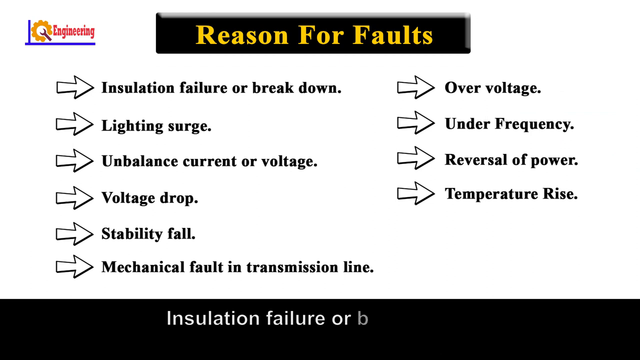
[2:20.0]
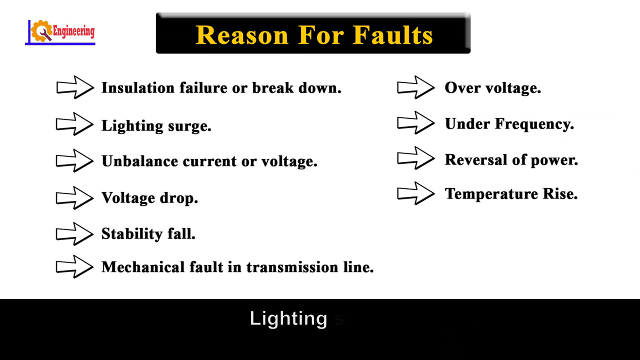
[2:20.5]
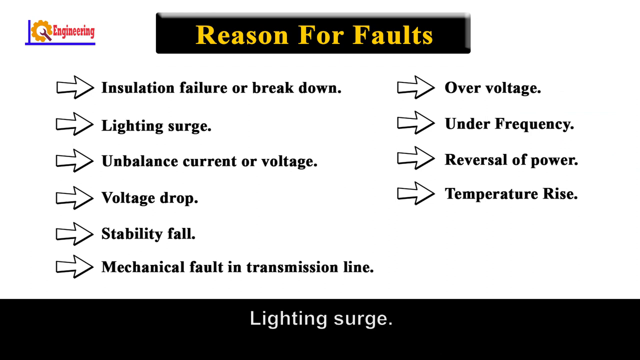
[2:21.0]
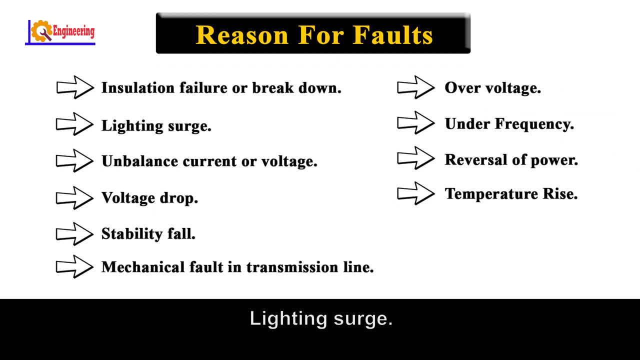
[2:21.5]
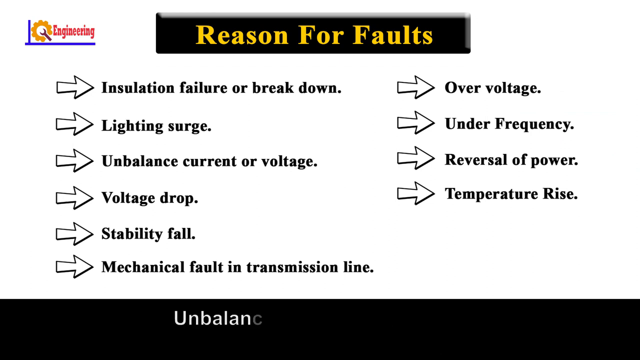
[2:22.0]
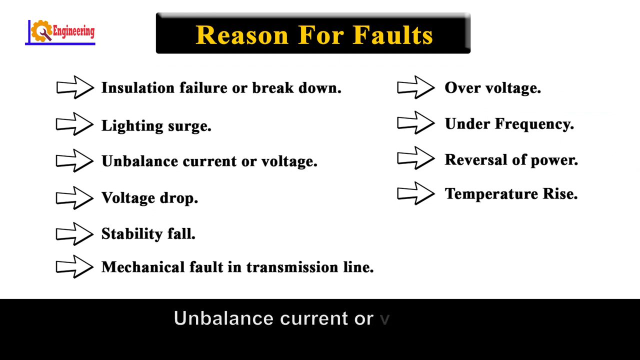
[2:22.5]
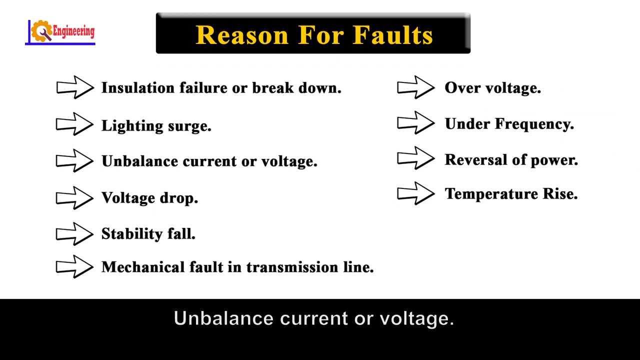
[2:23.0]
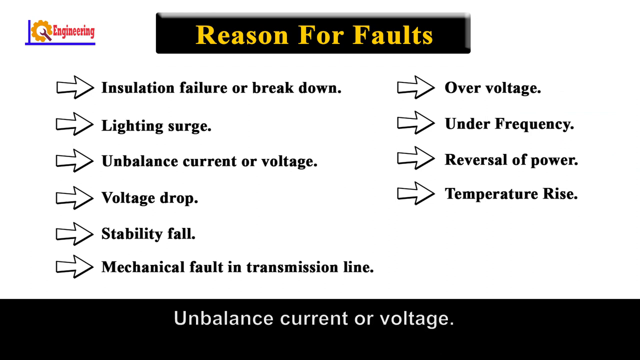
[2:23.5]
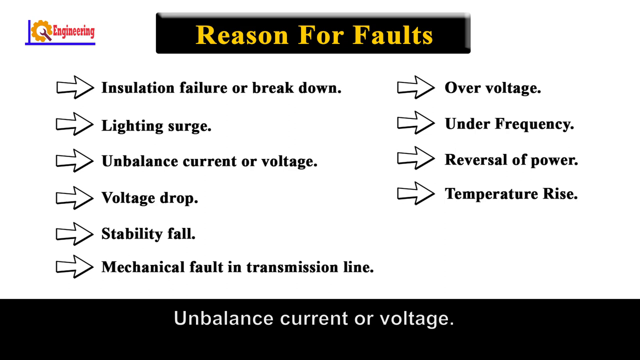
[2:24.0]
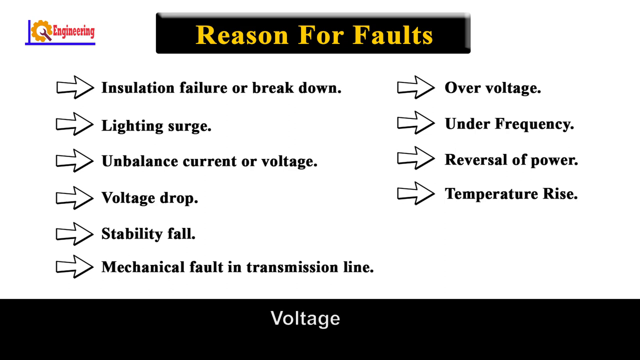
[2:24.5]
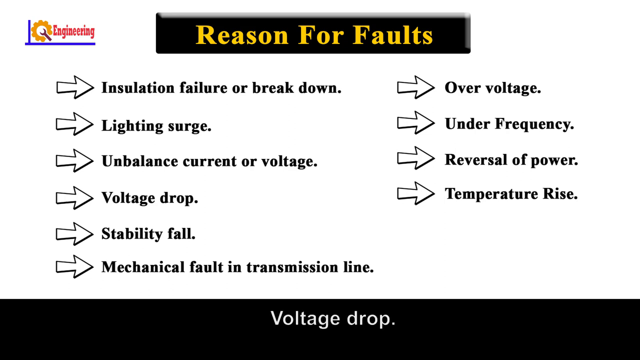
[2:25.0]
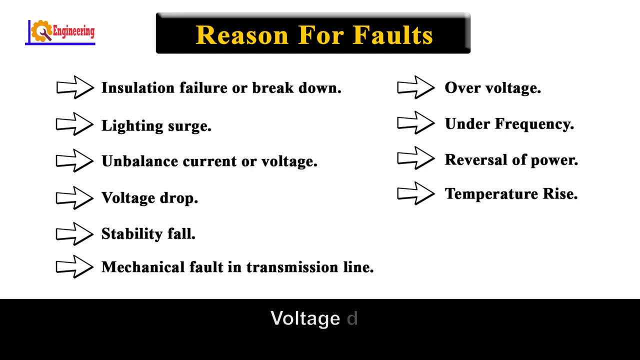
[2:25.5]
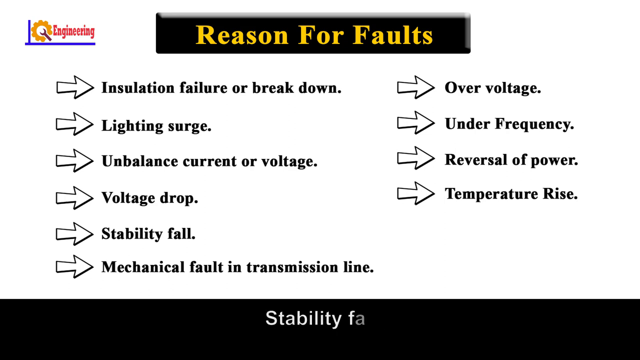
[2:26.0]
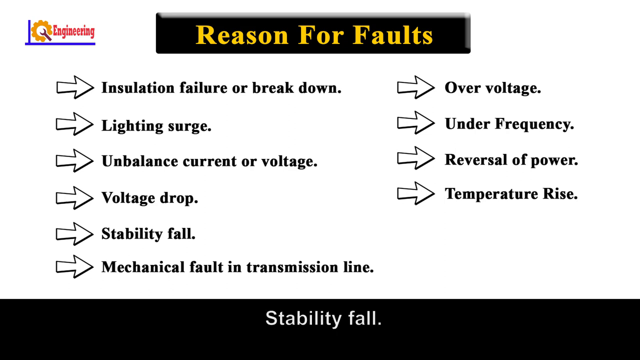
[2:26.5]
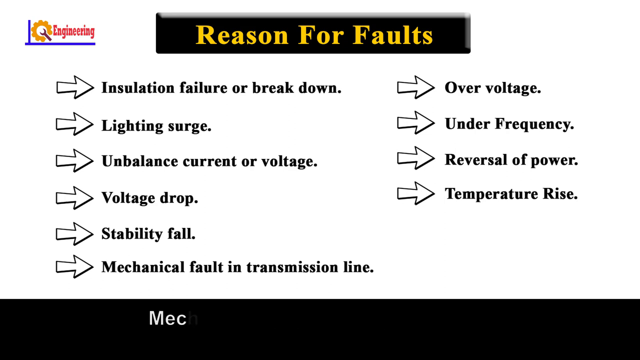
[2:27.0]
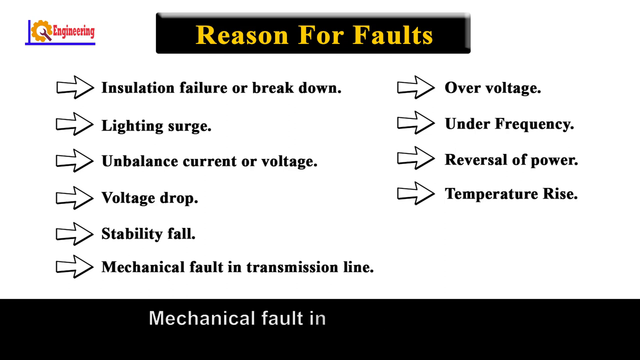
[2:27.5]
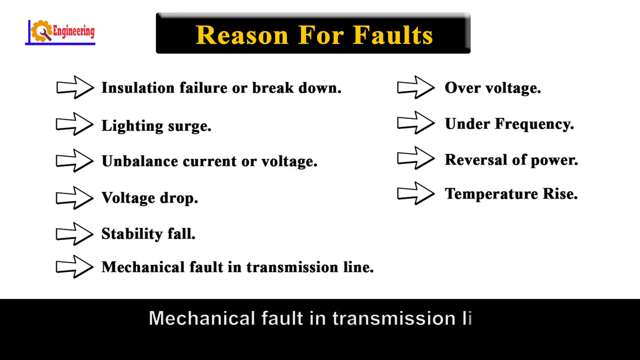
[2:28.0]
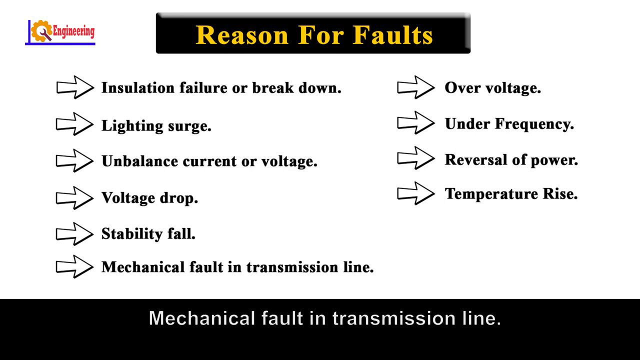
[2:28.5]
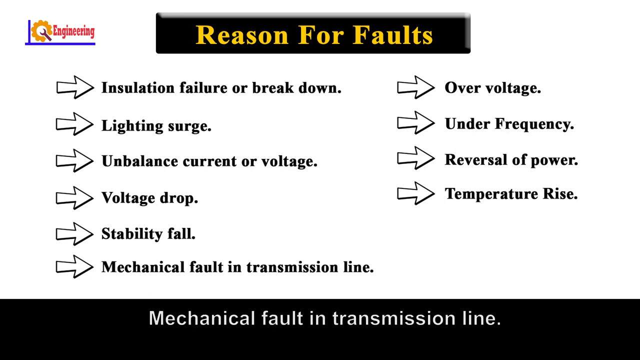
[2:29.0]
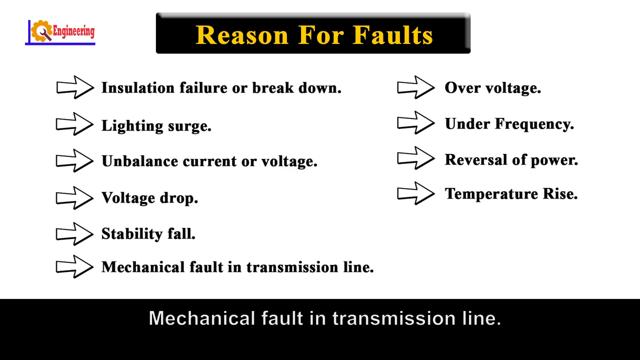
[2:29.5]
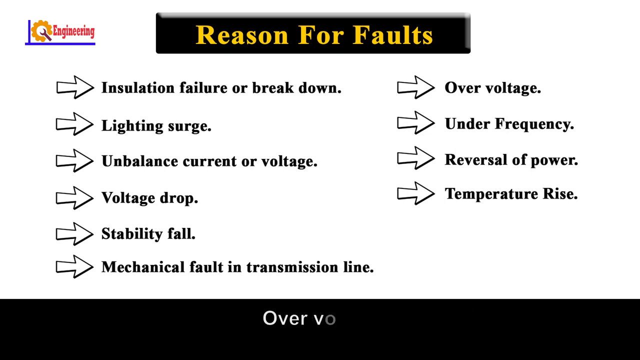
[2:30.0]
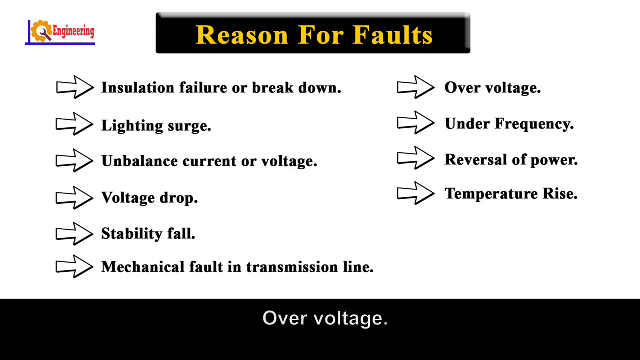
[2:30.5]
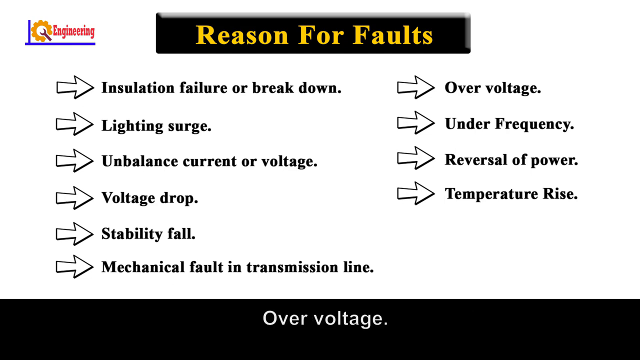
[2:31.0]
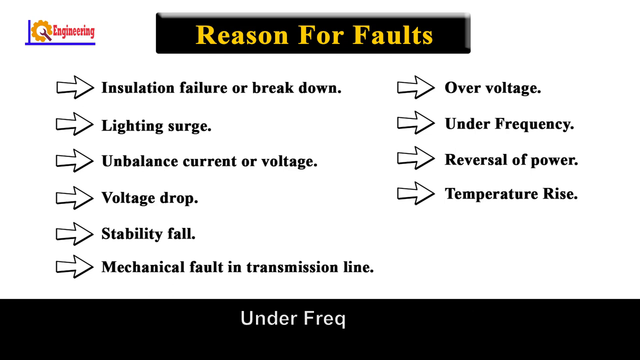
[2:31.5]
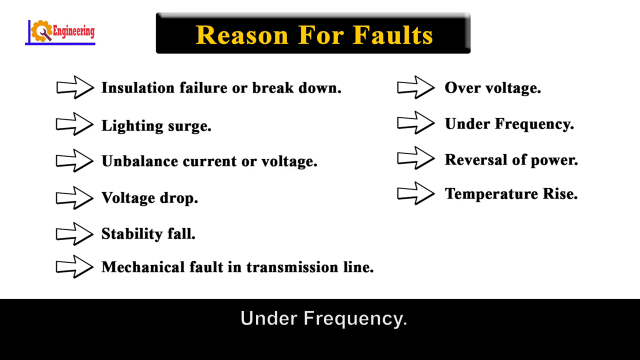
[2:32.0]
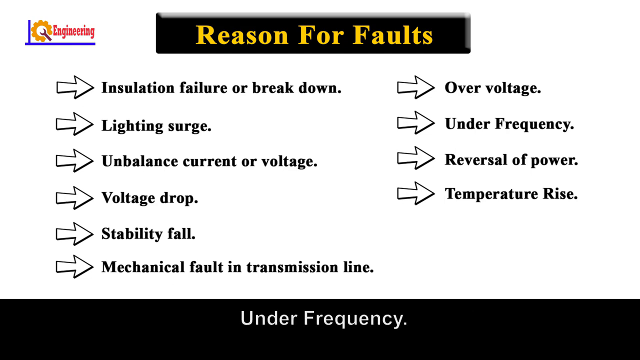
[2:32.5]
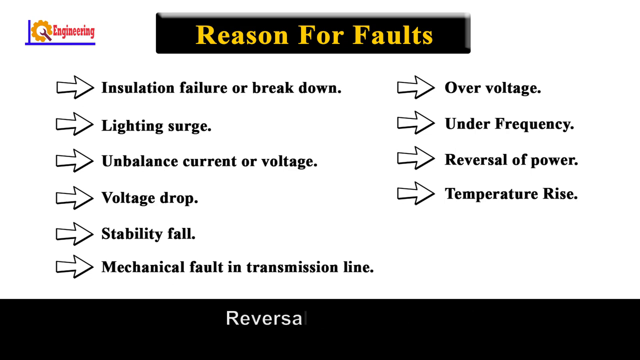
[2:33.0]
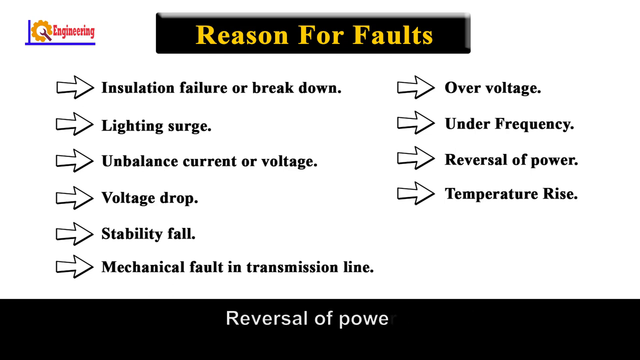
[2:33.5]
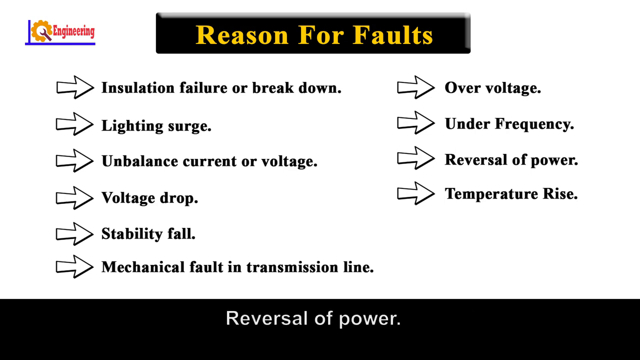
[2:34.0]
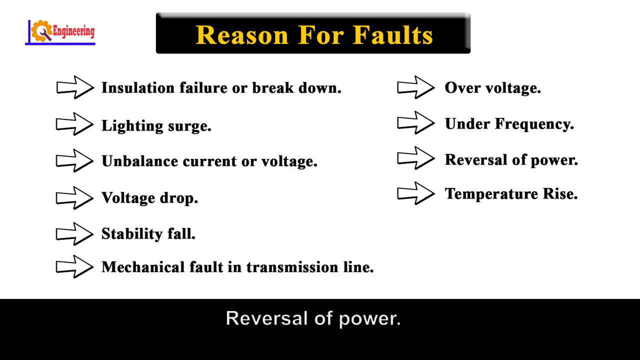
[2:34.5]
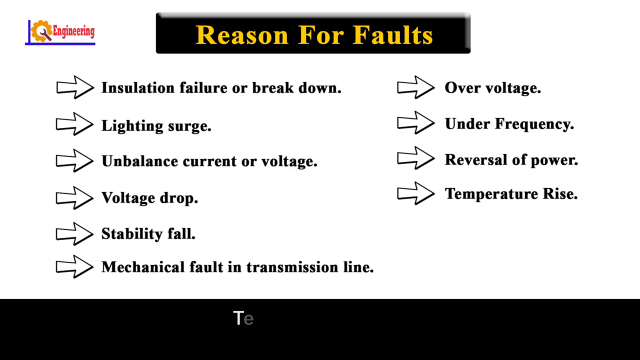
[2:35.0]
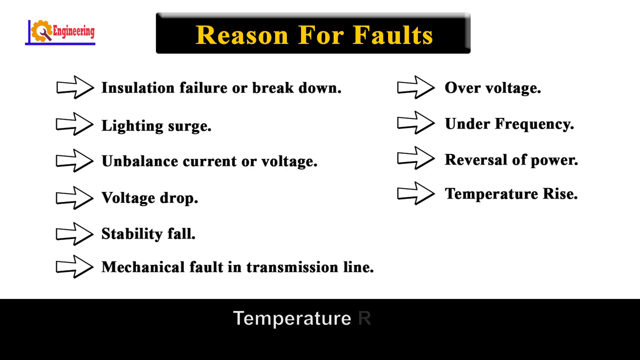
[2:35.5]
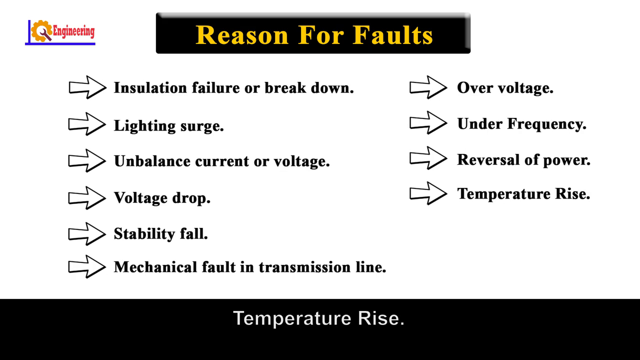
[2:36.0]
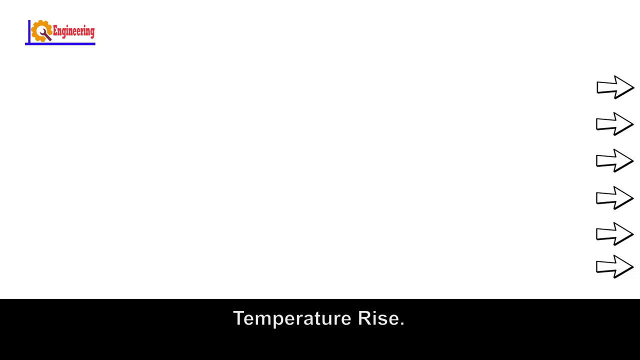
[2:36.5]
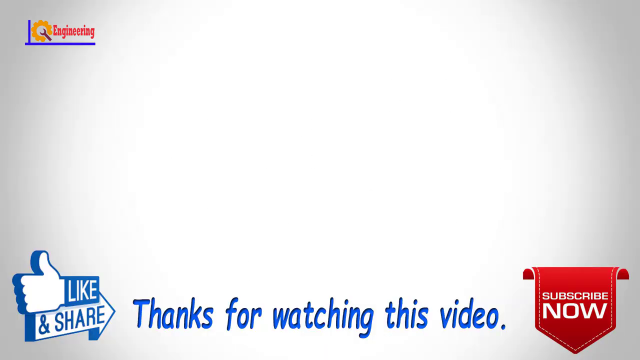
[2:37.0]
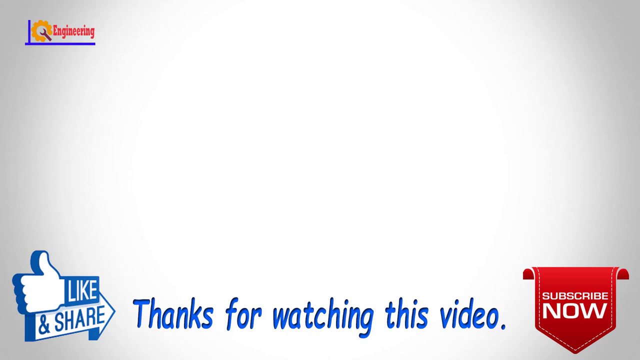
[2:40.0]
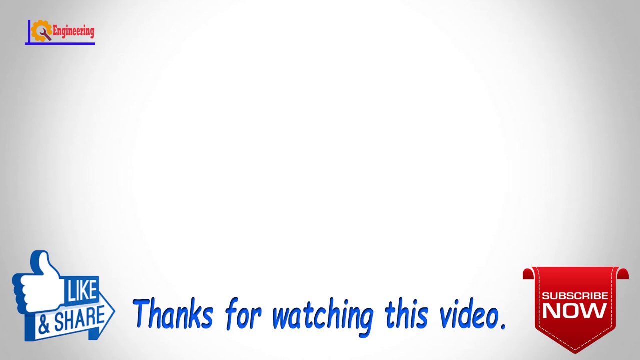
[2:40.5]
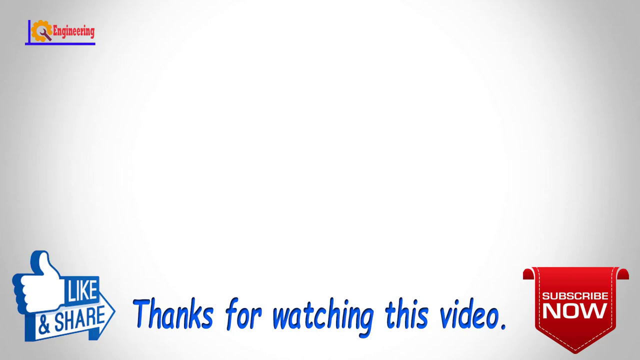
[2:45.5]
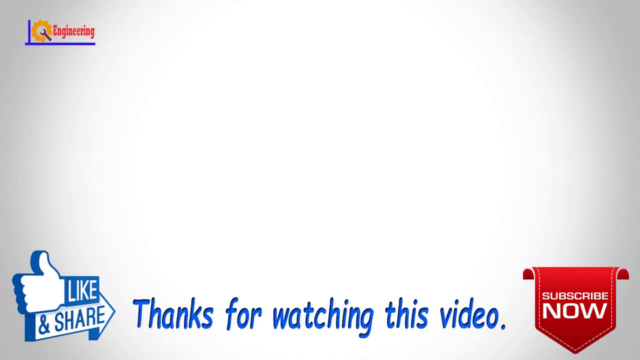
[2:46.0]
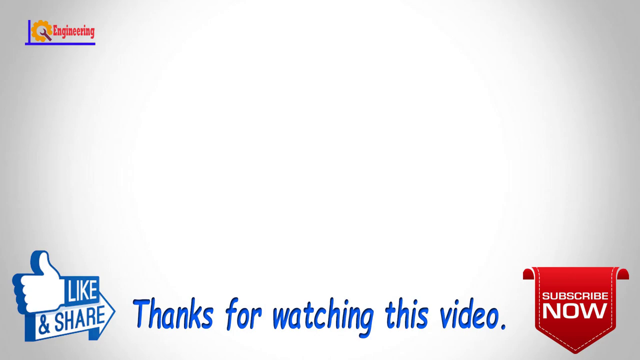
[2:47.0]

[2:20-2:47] The reasons for the faults, including unbalanced current, appear to be gone through one by one with the caption. The video then moves to what looks like a standard thanks-for-watching screen, which indicates to like and share as well as subscribe now.